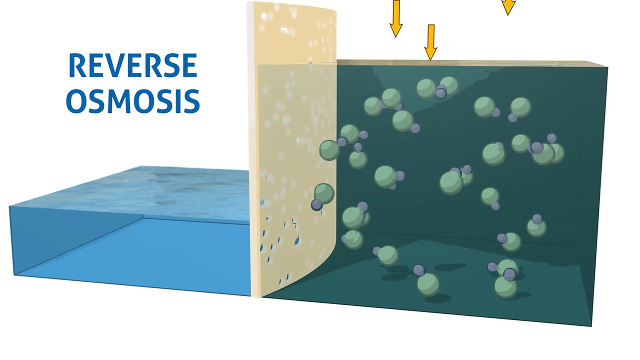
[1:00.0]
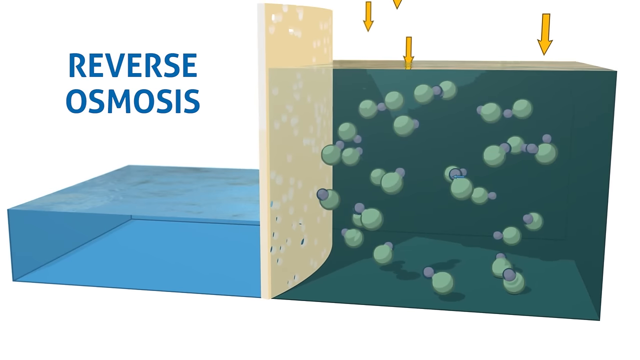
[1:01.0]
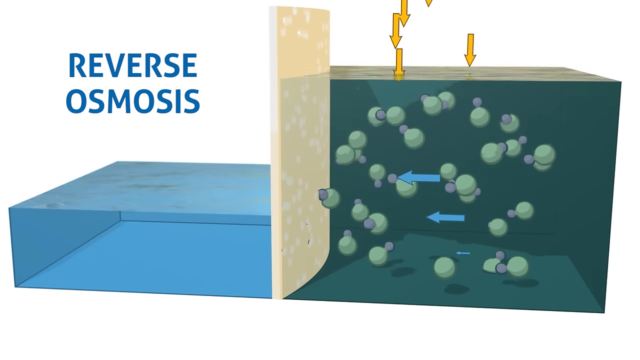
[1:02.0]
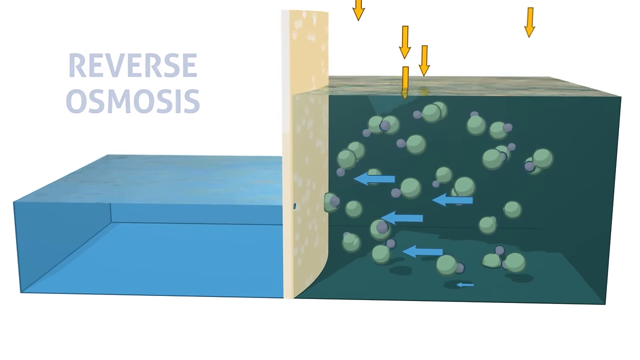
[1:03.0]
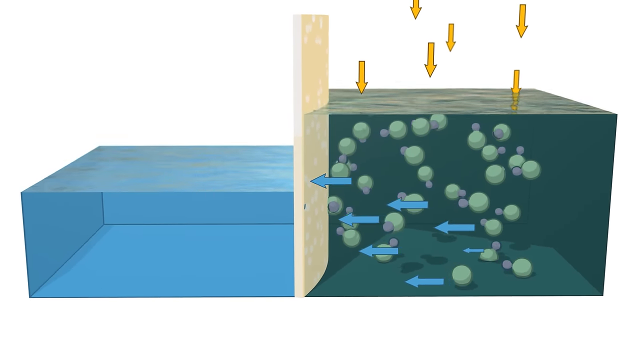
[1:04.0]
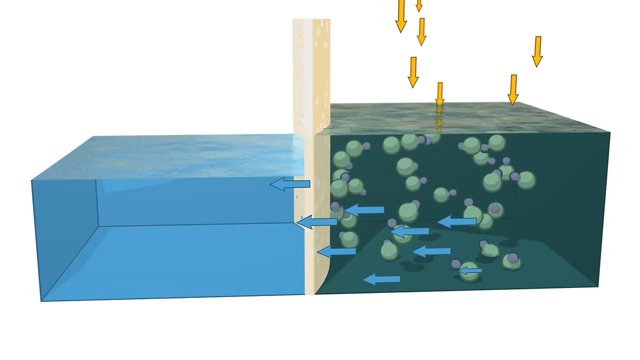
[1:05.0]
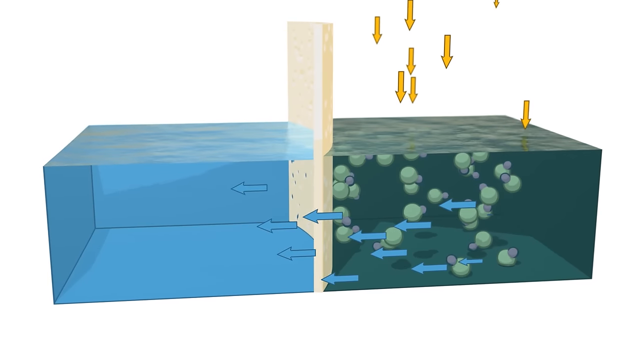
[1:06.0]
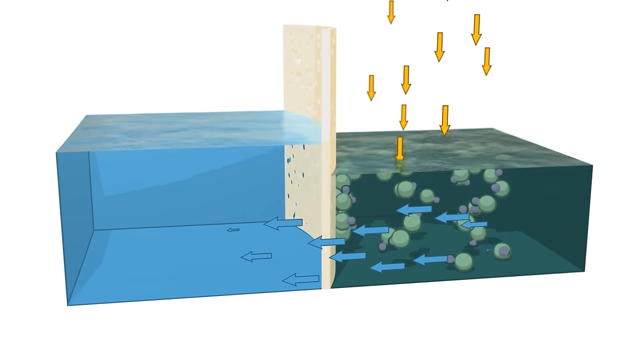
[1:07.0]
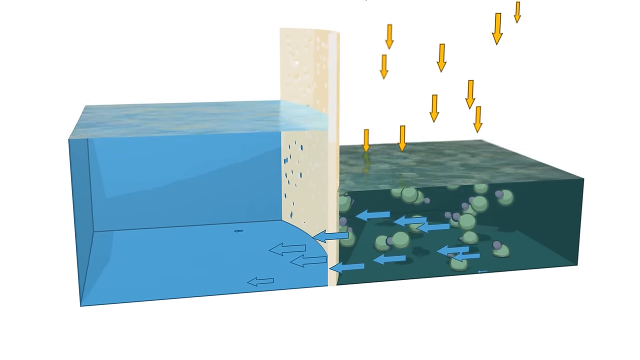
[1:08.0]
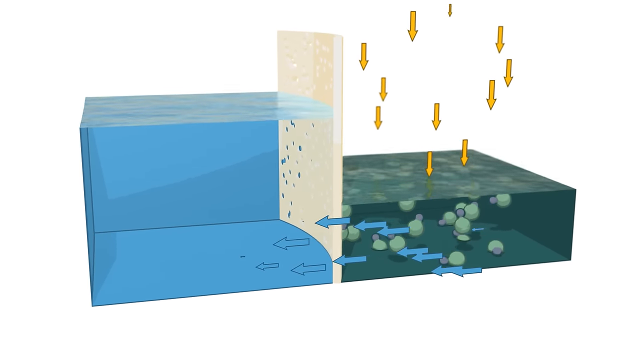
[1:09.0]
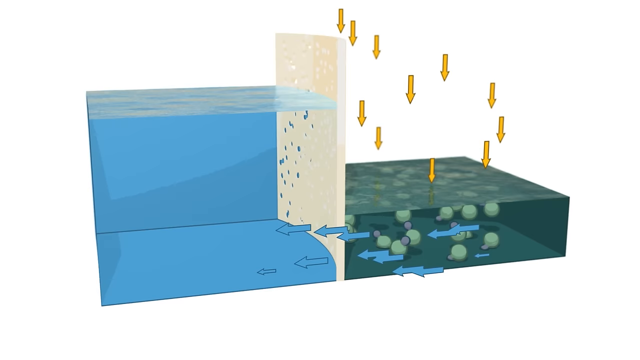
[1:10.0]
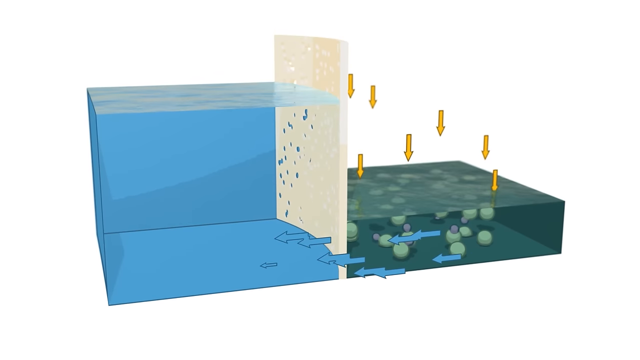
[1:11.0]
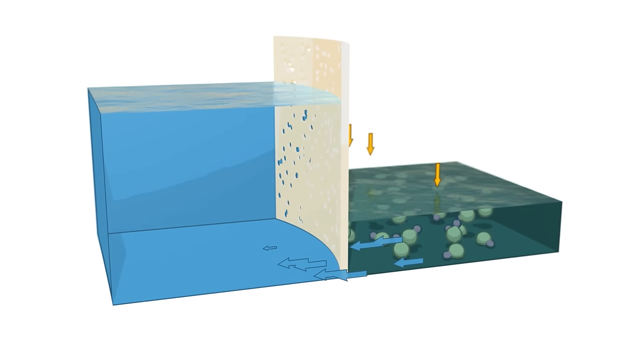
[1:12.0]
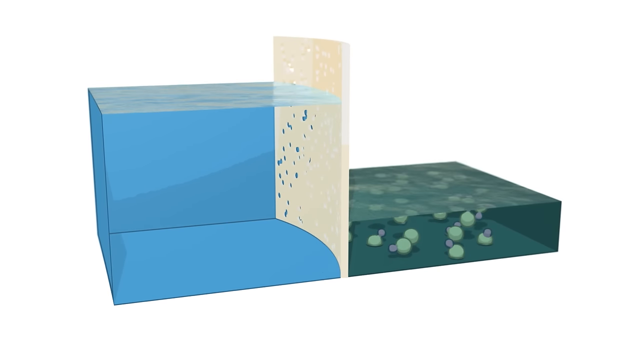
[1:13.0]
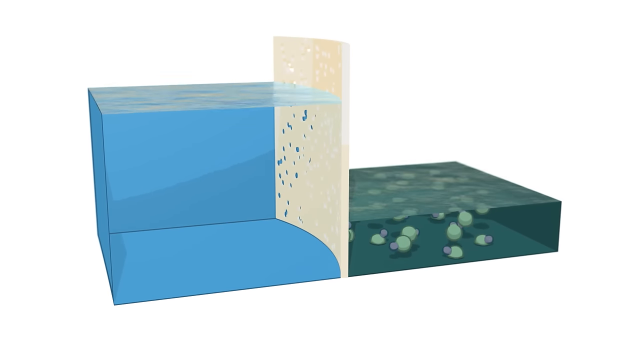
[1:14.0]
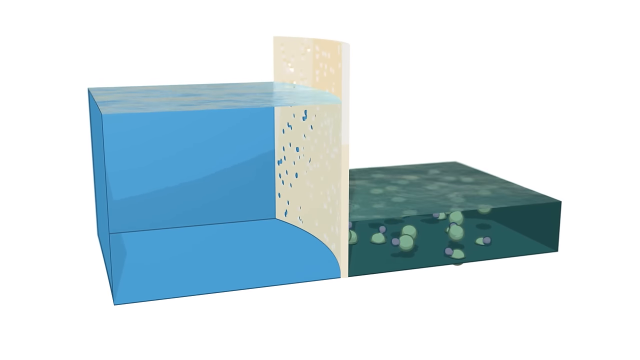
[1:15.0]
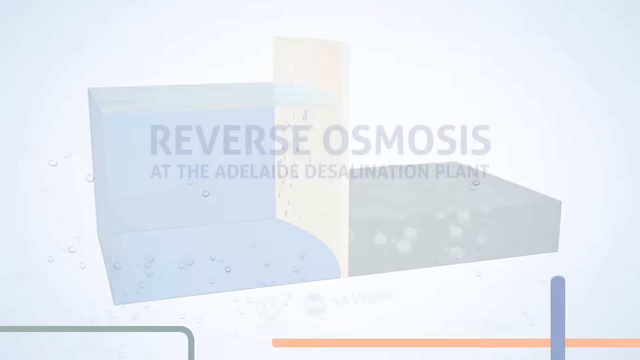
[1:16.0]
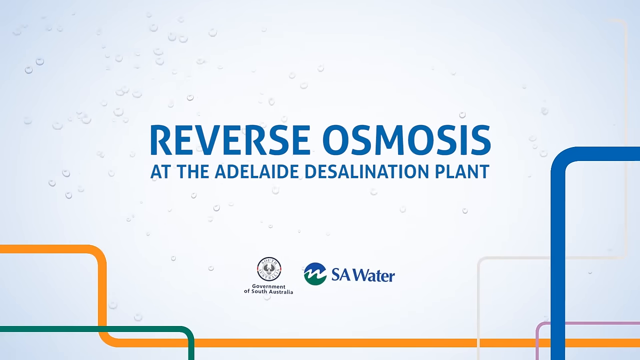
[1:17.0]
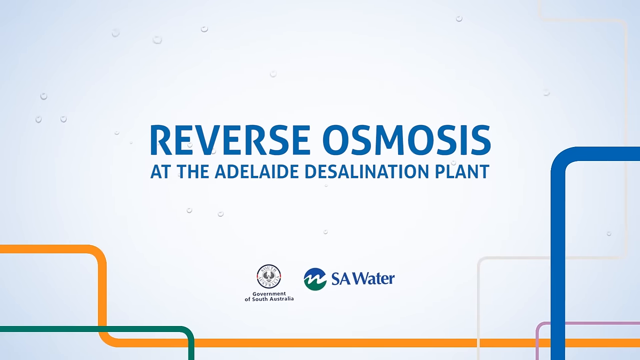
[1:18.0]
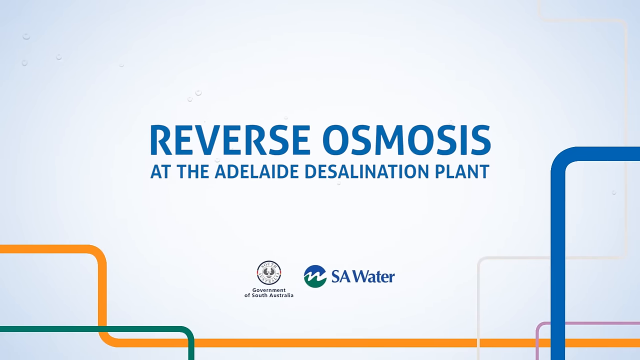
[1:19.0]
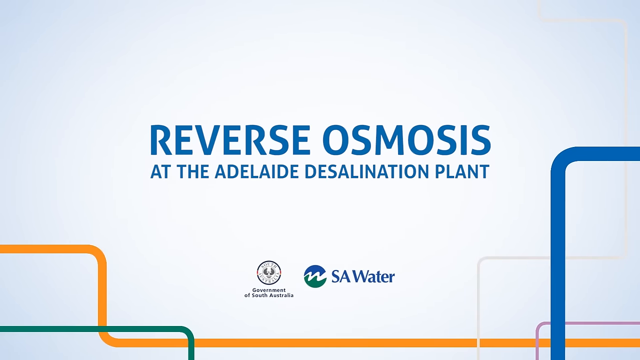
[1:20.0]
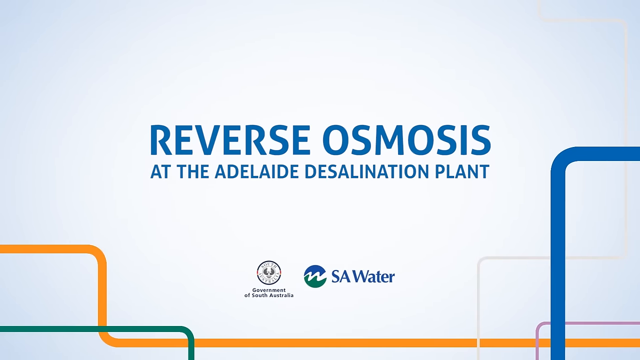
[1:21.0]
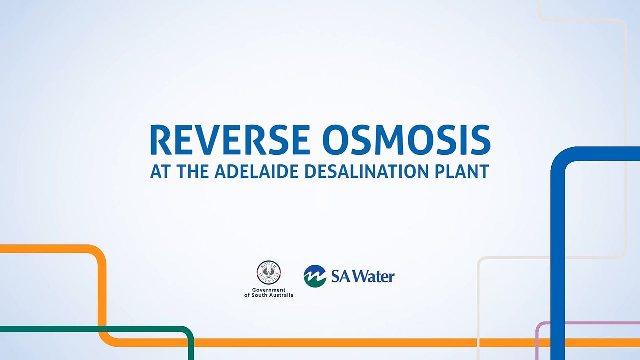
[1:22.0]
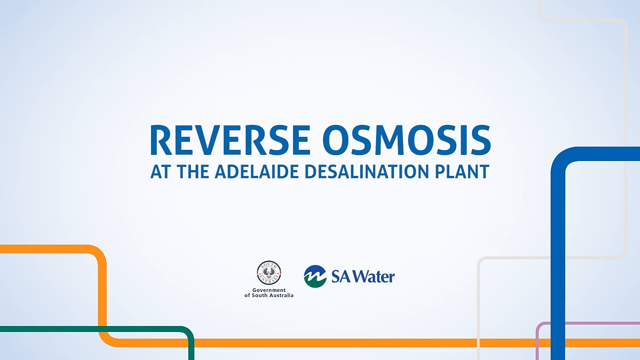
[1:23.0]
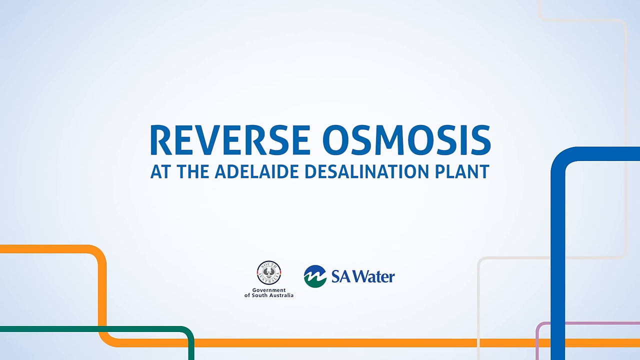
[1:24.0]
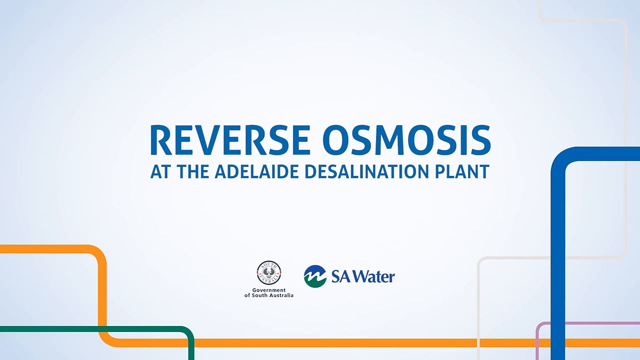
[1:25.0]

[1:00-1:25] Yellow arrows flow downward into the green section of water with salt molecules in it. Blue arrows point from the green section toward the clear blue section, flowing through the membrane into the clear blue section and causing it to rise much higher. As the process goes on, yellow arrows continually point down to the green section while blue arrows flow into the clear blue section in groups of about 10. After the clear blue section has risen almost to the height of the membrane, a jump cut returns to the title slide: a clear white background with text in the middle saying "reverse osmosis at the Adelaide desalination plant" and two company or organization logos at the bottom middle. The slide stays on screen to the end.